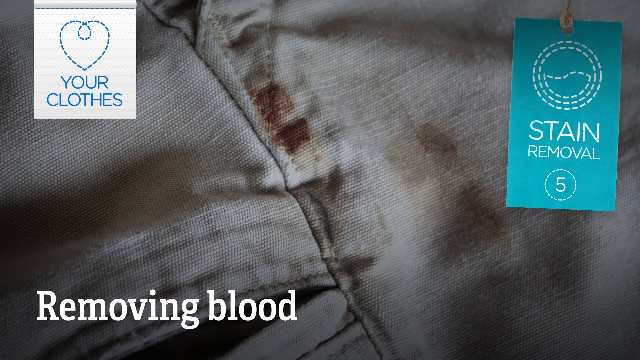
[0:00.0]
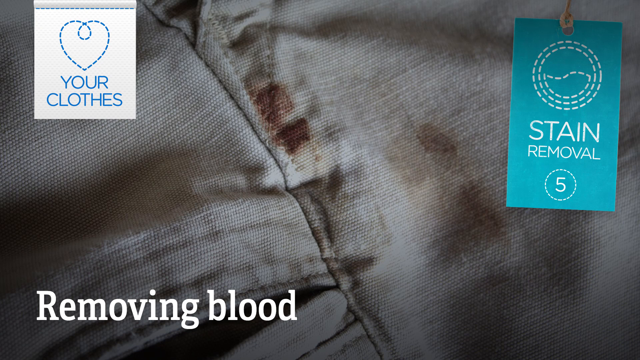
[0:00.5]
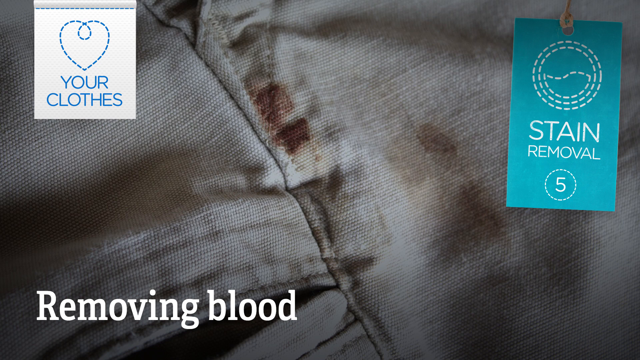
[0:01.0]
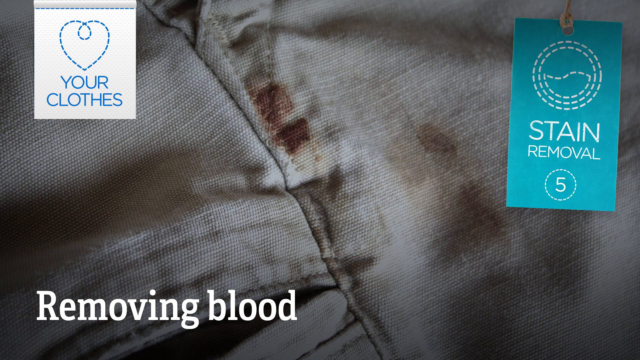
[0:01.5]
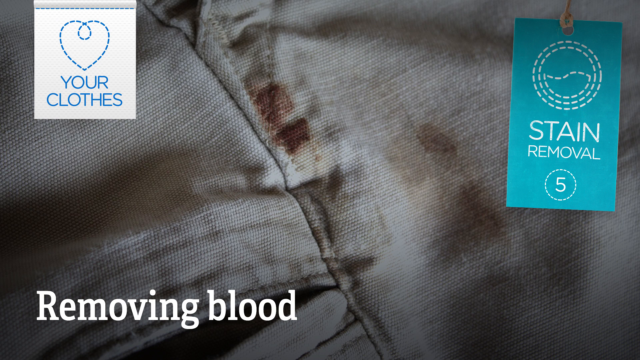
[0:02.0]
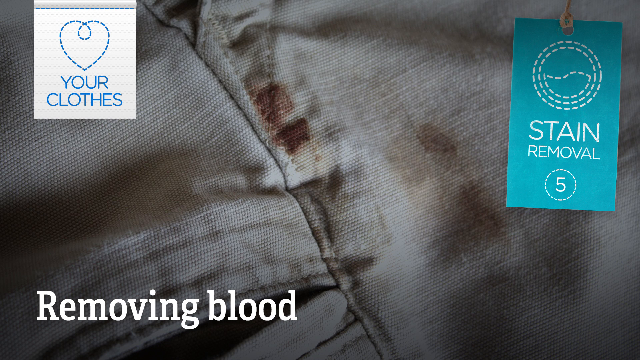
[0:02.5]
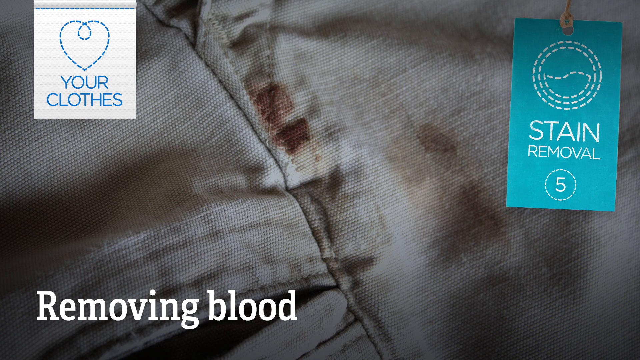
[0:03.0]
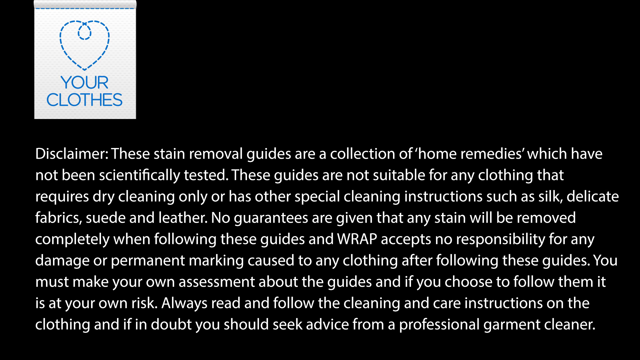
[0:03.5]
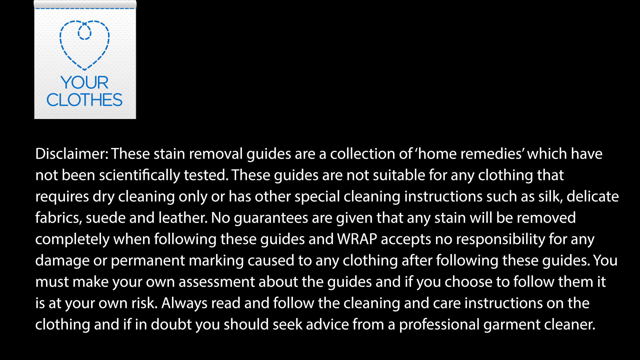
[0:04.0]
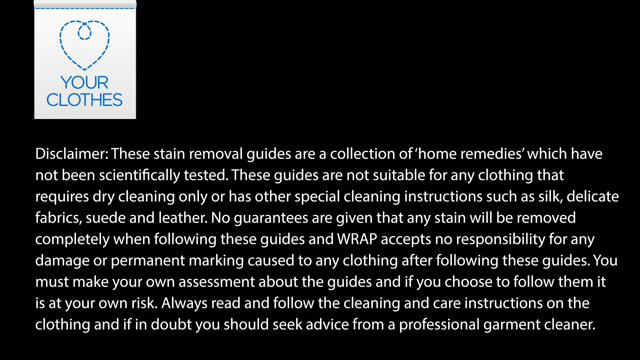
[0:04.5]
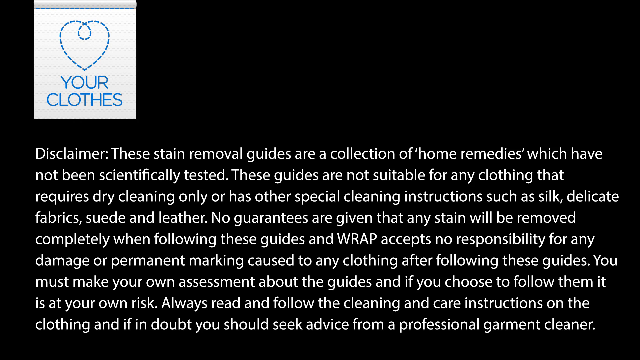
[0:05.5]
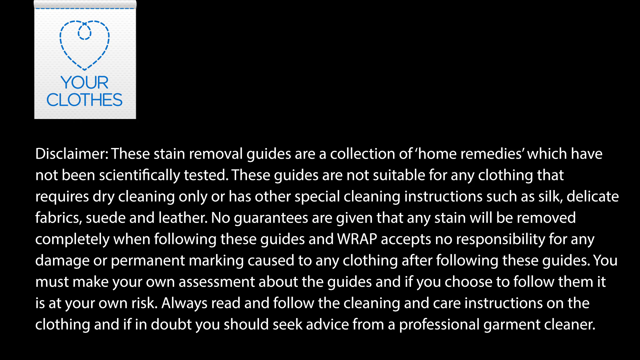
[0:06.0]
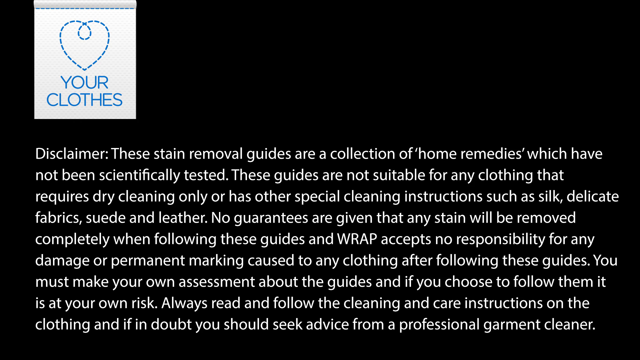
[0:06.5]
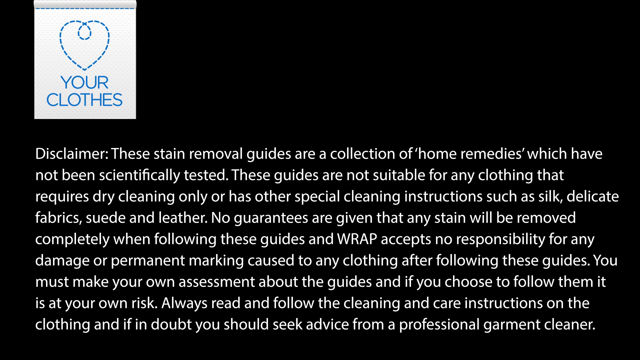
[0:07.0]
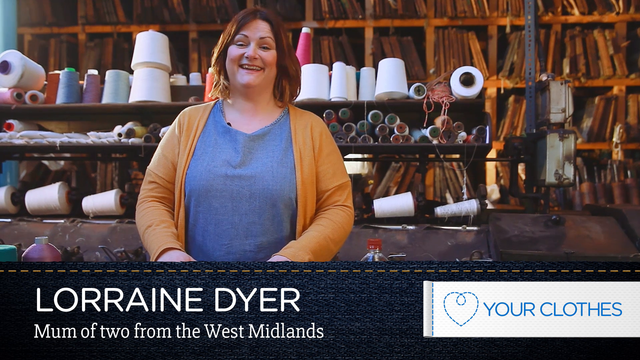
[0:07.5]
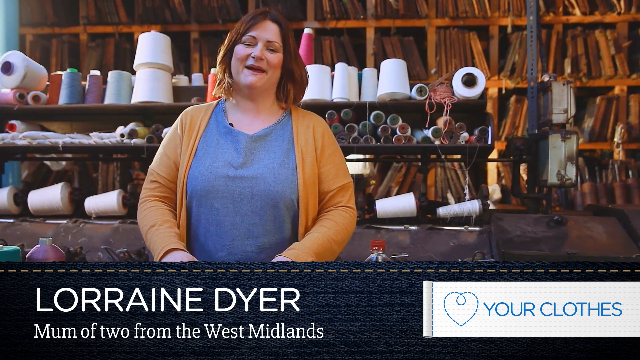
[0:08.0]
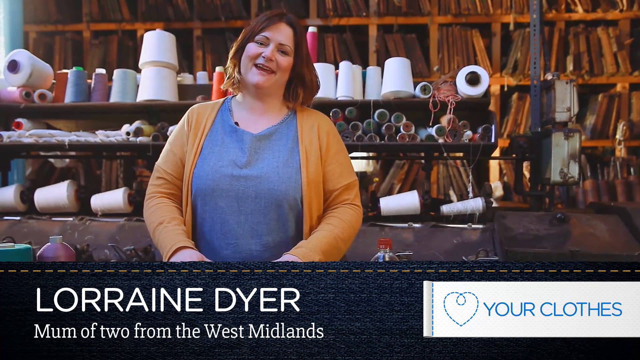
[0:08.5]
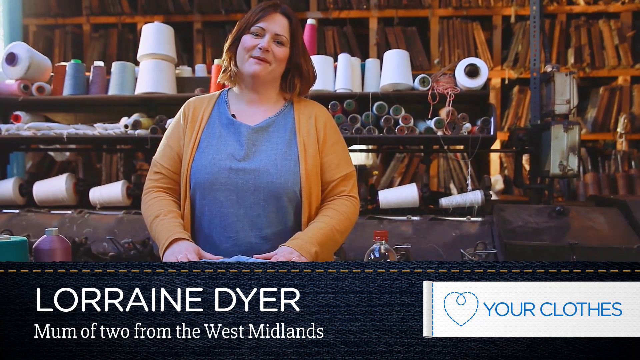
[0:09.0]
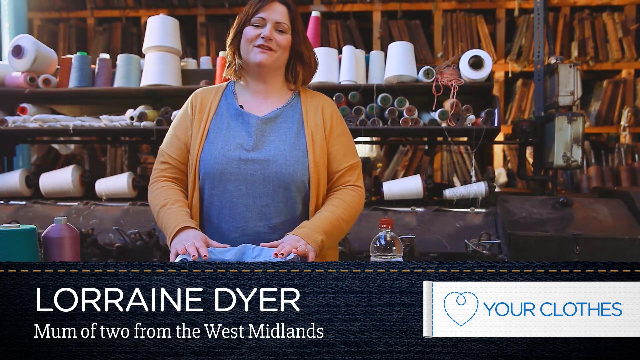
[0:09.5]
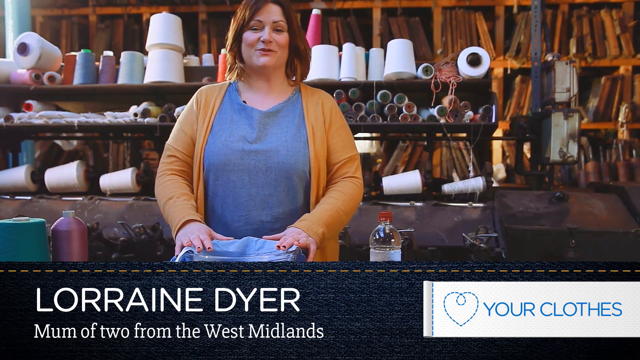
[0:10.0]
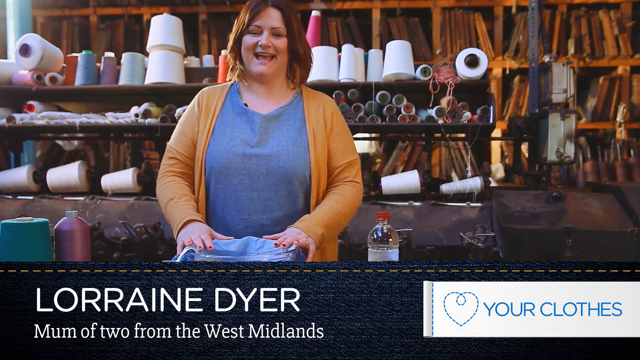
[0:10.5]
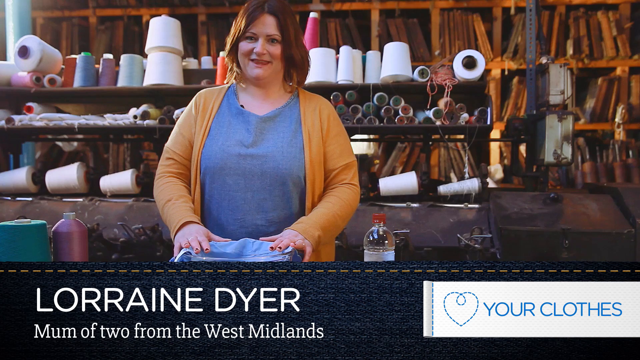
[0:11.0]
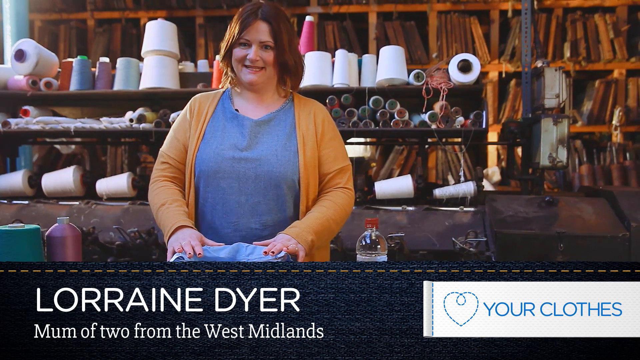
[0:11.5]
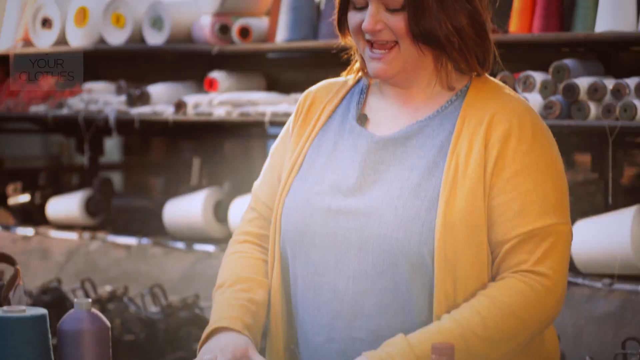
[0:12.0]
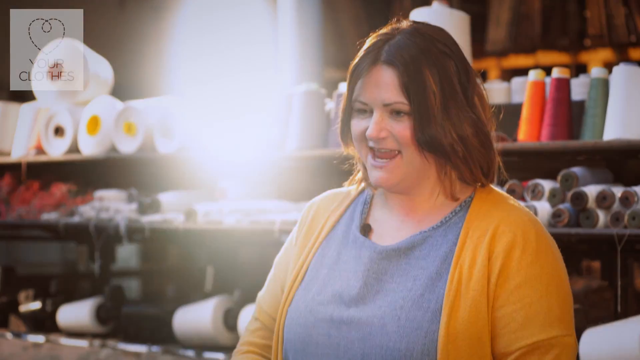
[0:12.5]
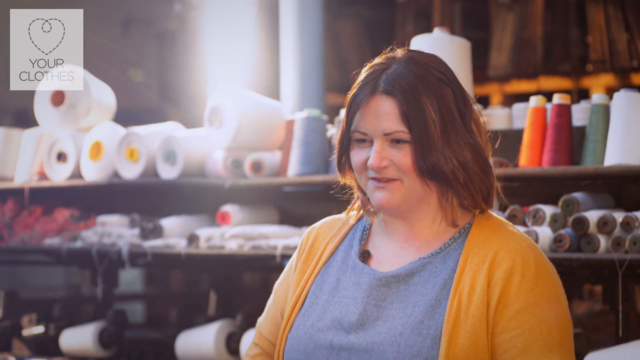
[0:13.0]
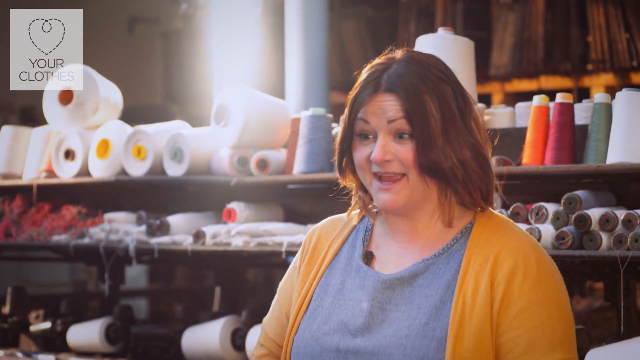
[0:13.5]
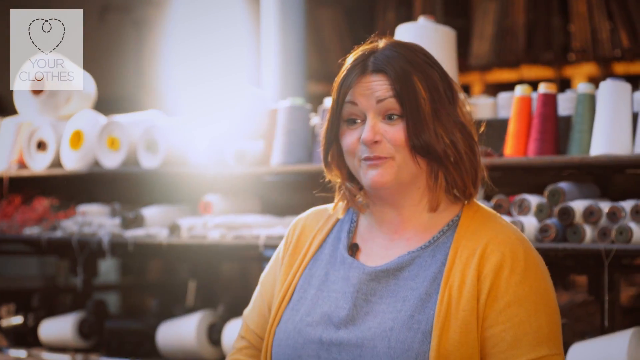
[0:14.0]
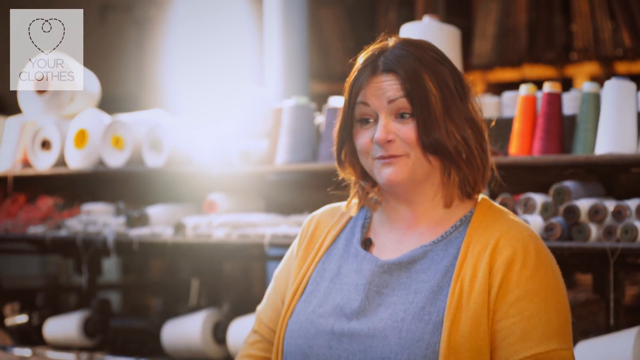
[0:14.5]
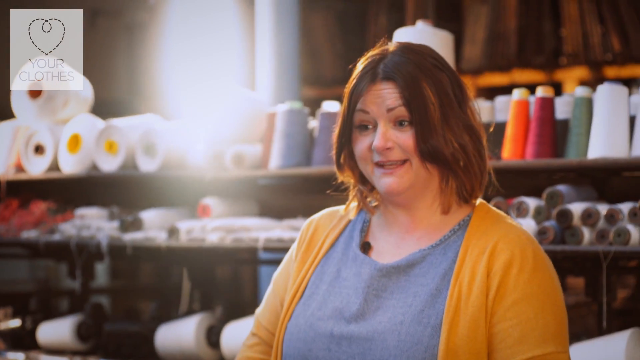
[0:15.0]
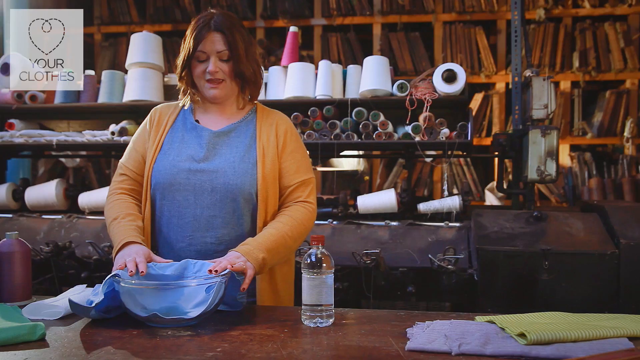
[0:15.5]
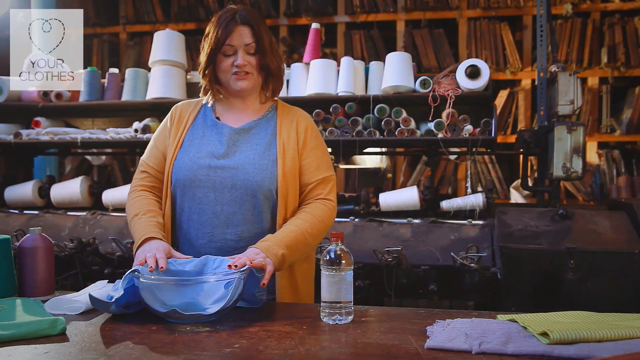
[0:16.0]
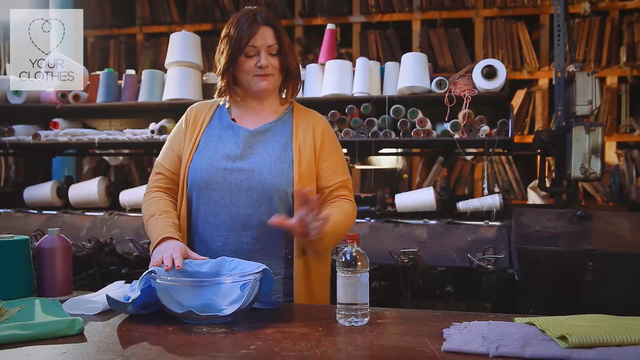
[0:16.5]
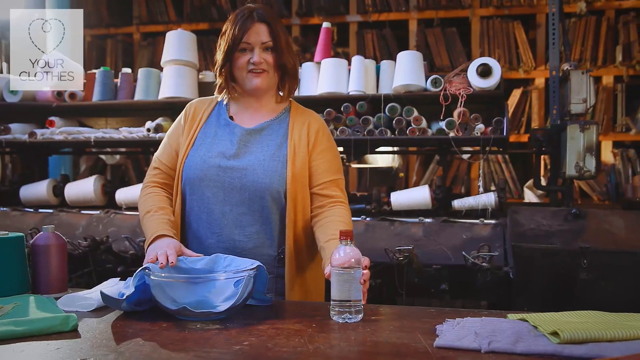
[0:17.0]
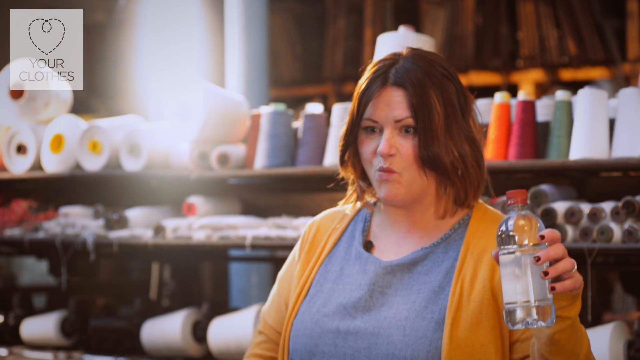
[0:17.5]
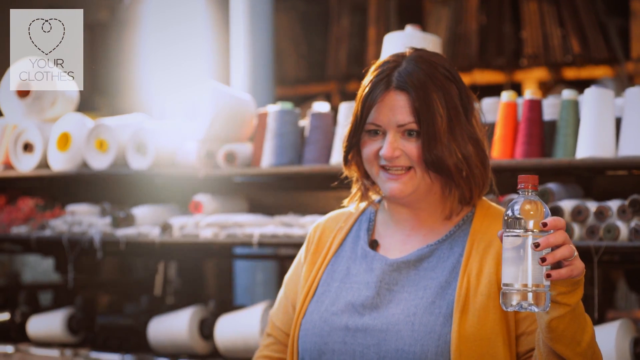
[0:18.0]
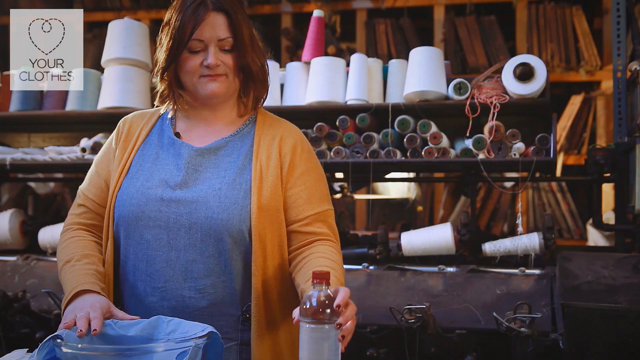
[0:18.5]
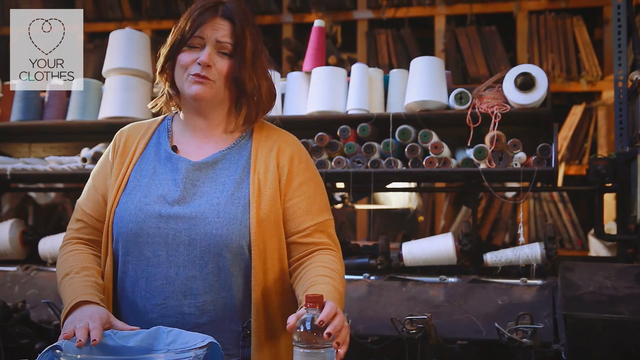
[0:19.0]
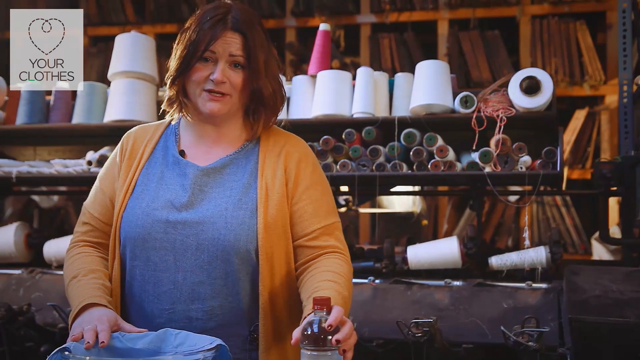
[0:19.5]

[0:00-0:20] This appears to be a how-to style video showing how to remove a stain from clothing or from cloth in general. In the upper left-hand corner is a white tag with a blue, somewhat heart-shaped stitched logo, with "Your Clothes" written underneath it. On the right-hand side, a blue rectangular box pops up reading "Stain Removal" with the number "5" underneath. In the bottom left-hand corner, the text "Removing Blood" appears with an image of a cloth that has a dried blood stain on it. A screen with a black background then pops up, giving warning information that this may or may not help in removing the stain and that, depending on the materials, it could cause damage and other issues. The scene switches to a room with a woman wearing a yellow sweater with a blue top. She is standing in front of a bunch of different yarn and materials in what looks like a textile-type shop. In front of her are a bowl with a cloth in it and some water or cleaning chemical in a bottle, and her name and occupation are written underneath.